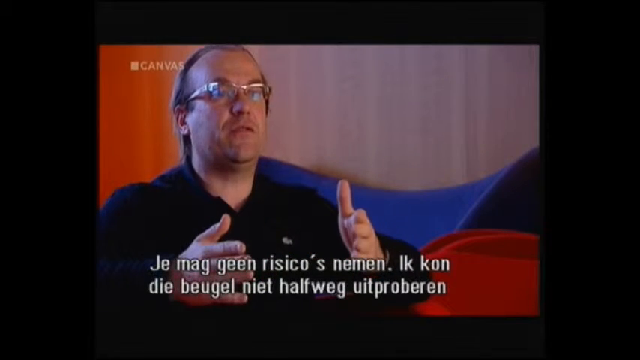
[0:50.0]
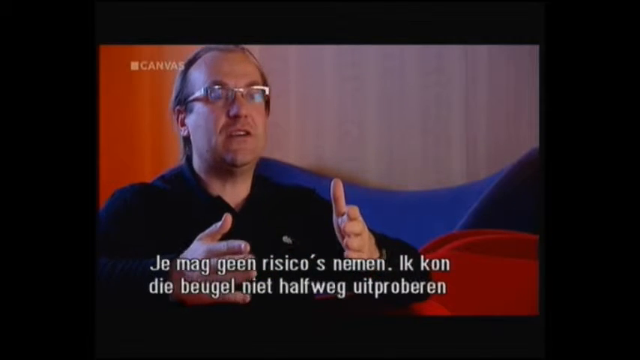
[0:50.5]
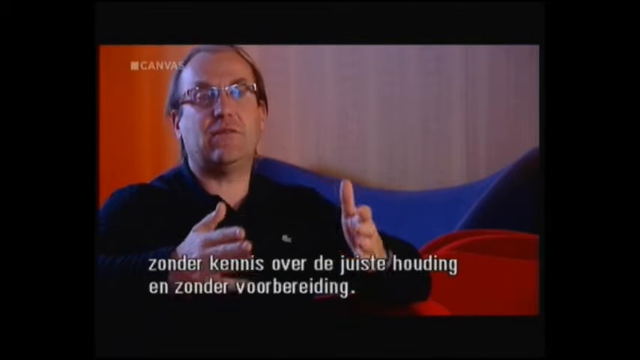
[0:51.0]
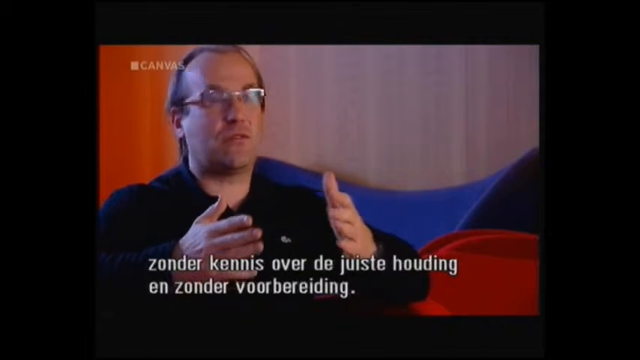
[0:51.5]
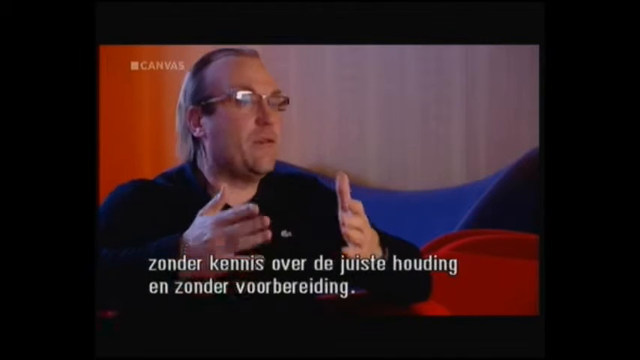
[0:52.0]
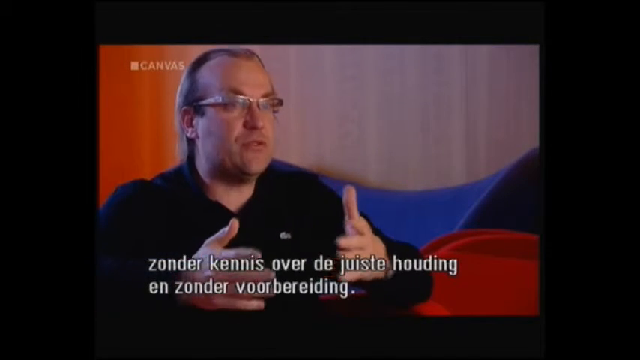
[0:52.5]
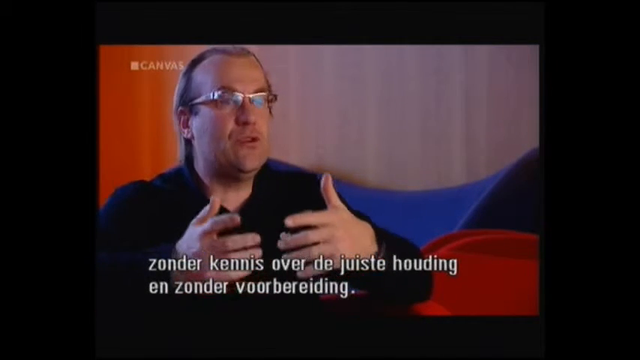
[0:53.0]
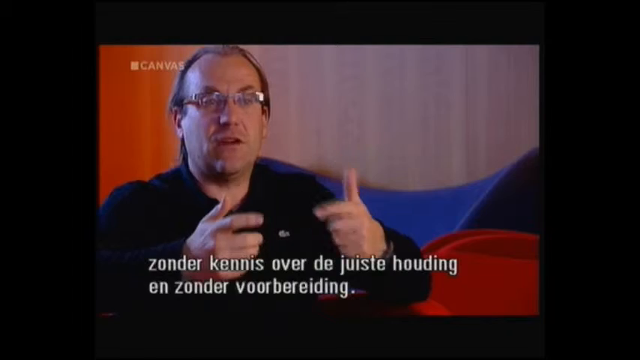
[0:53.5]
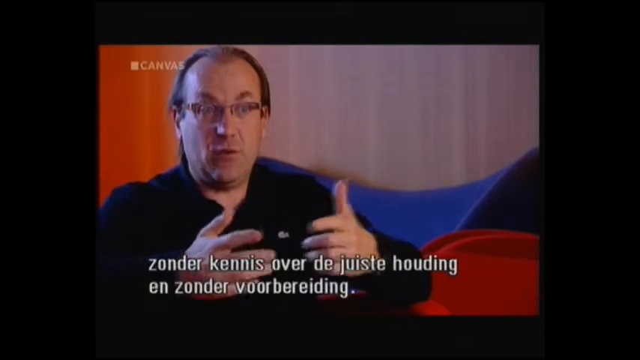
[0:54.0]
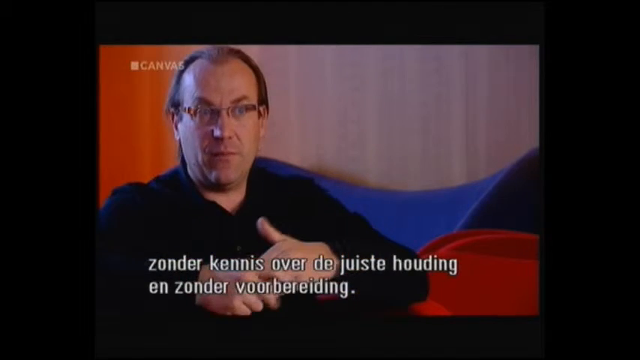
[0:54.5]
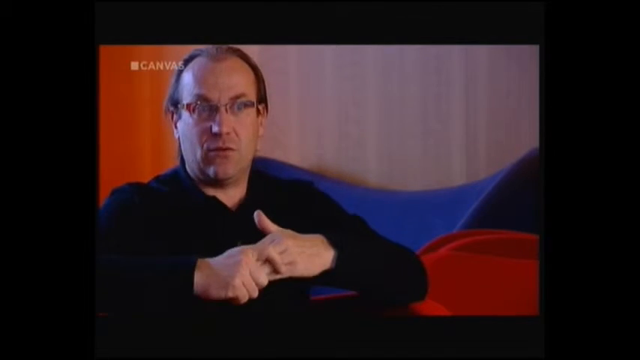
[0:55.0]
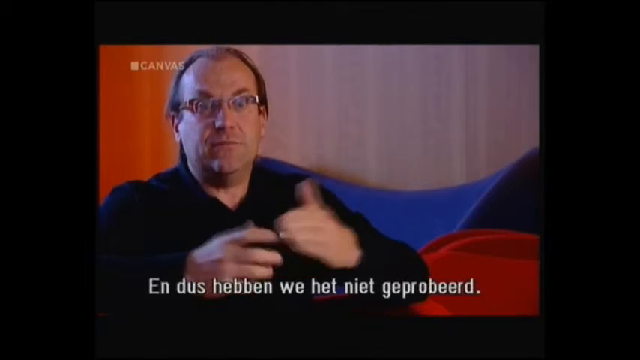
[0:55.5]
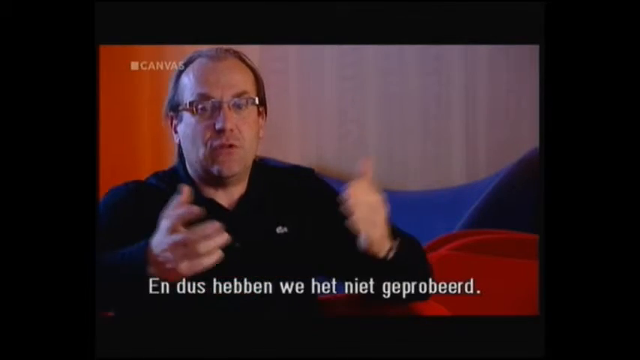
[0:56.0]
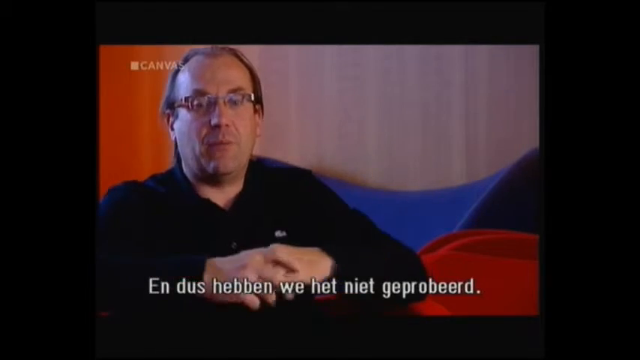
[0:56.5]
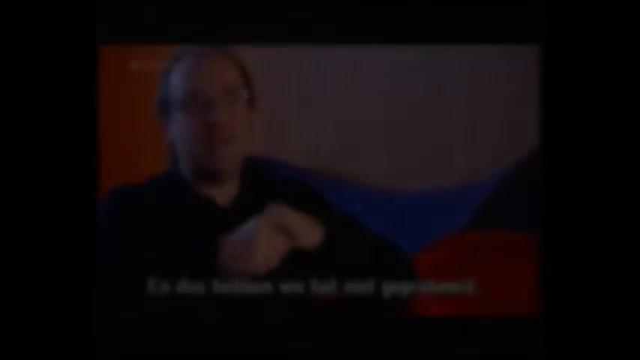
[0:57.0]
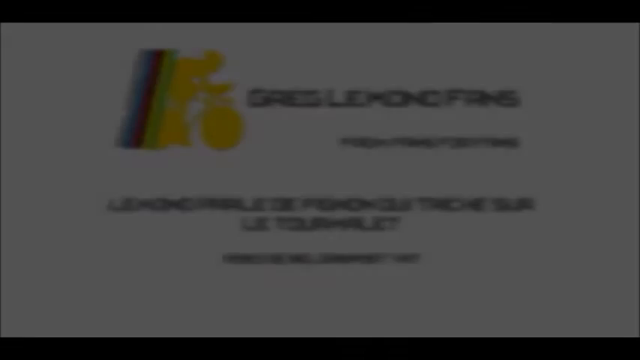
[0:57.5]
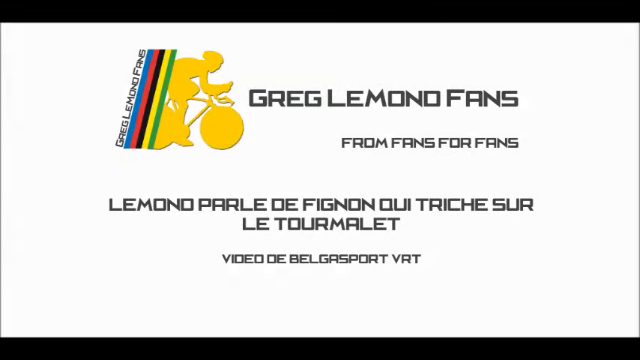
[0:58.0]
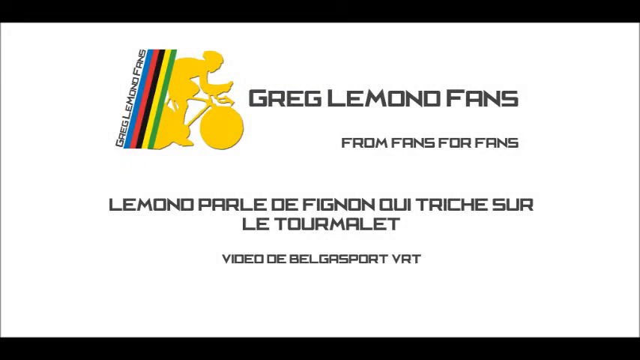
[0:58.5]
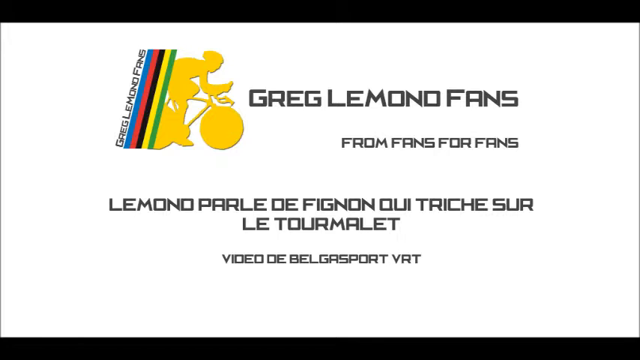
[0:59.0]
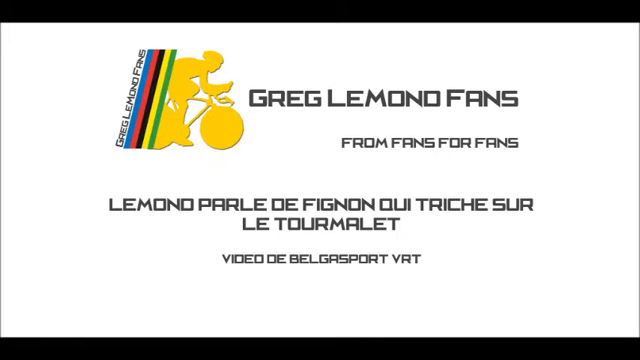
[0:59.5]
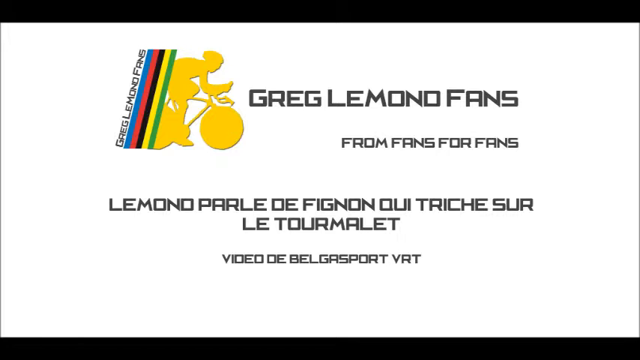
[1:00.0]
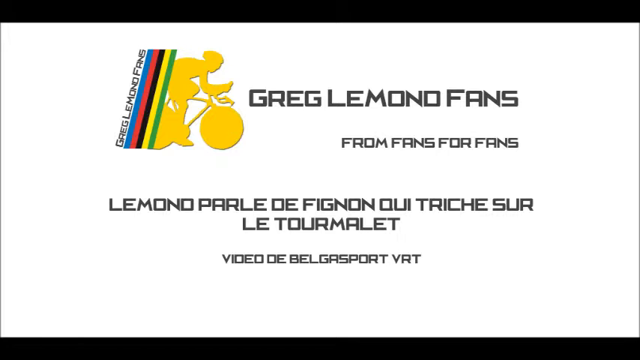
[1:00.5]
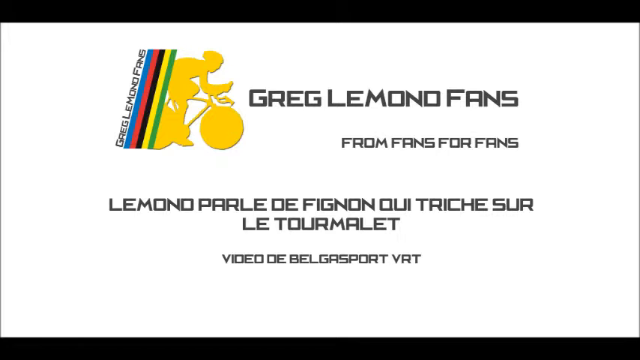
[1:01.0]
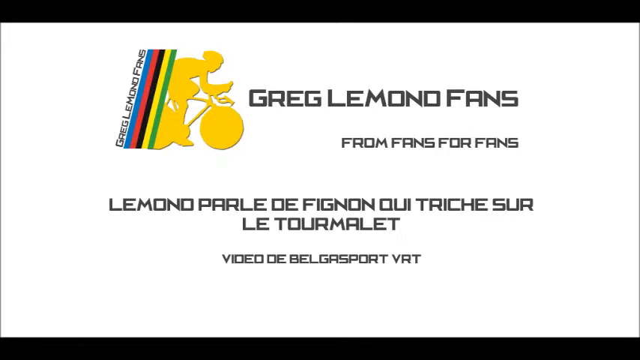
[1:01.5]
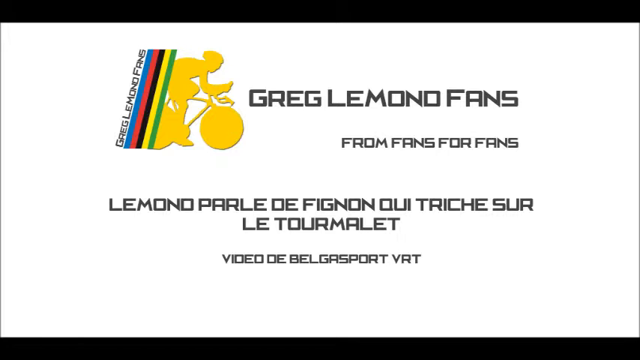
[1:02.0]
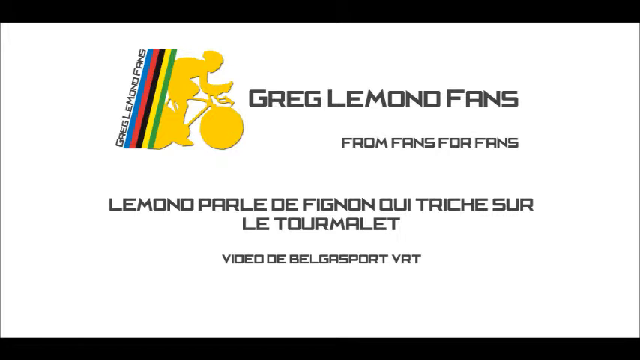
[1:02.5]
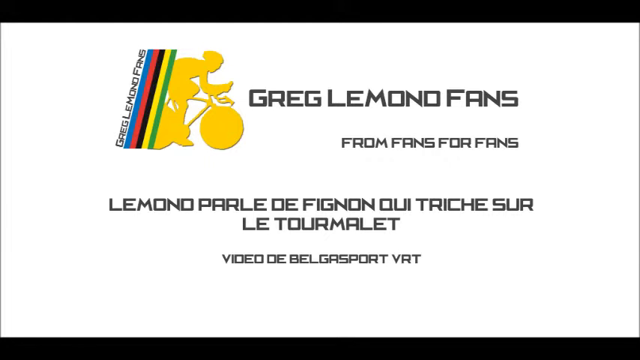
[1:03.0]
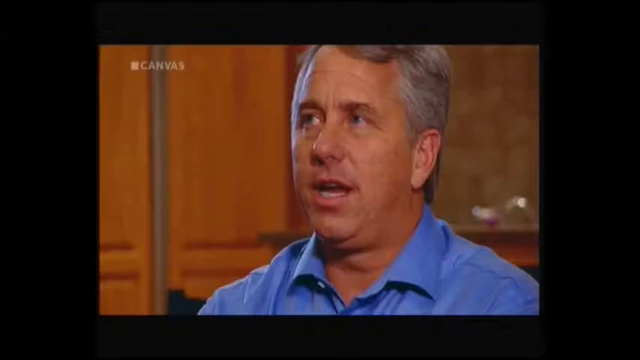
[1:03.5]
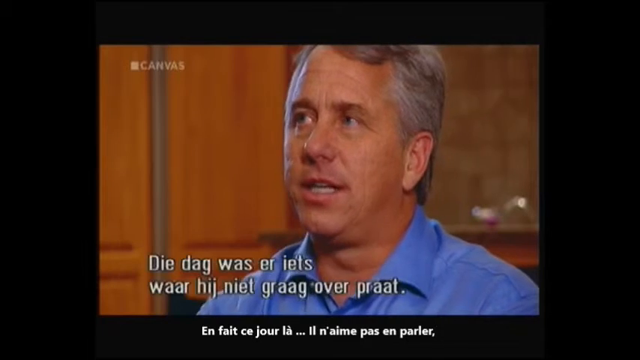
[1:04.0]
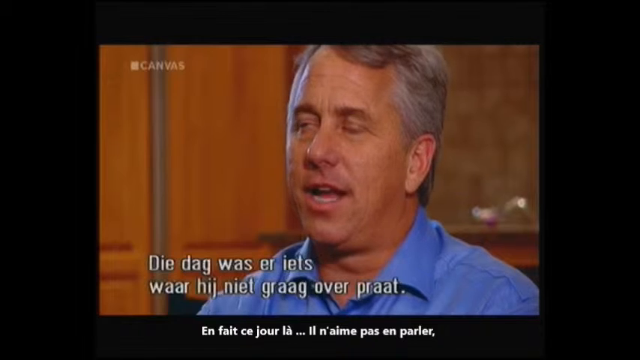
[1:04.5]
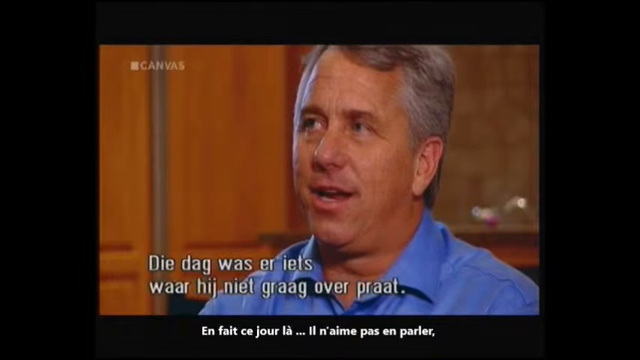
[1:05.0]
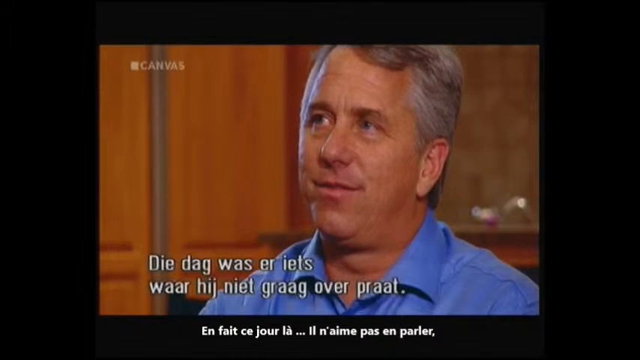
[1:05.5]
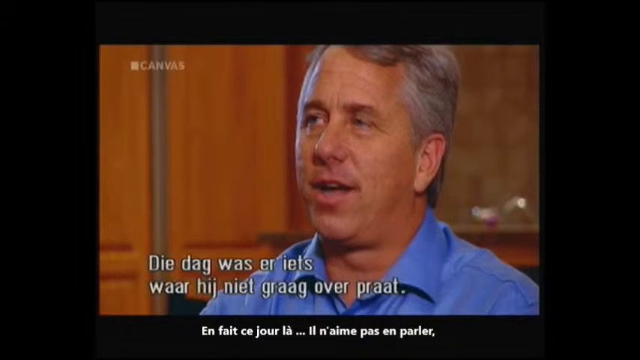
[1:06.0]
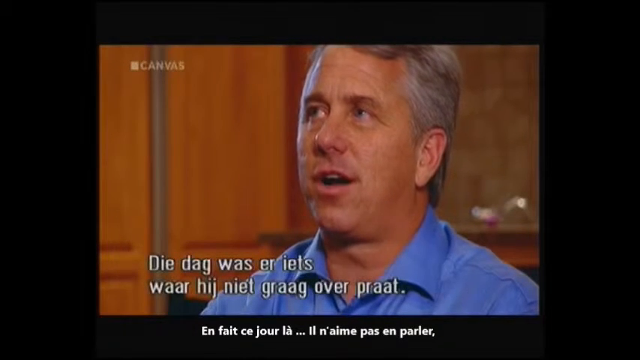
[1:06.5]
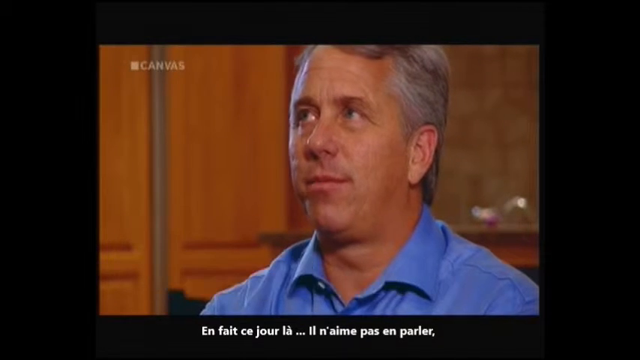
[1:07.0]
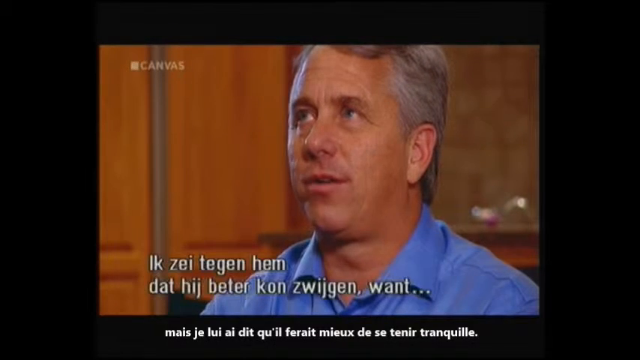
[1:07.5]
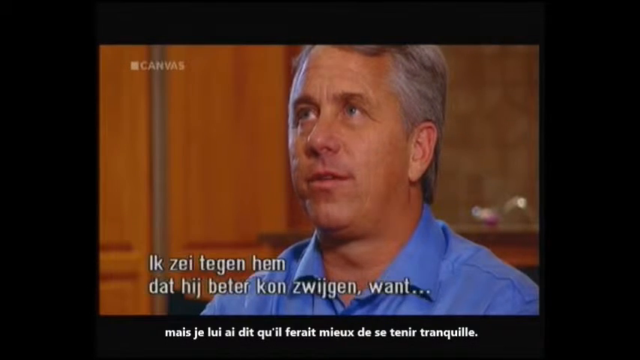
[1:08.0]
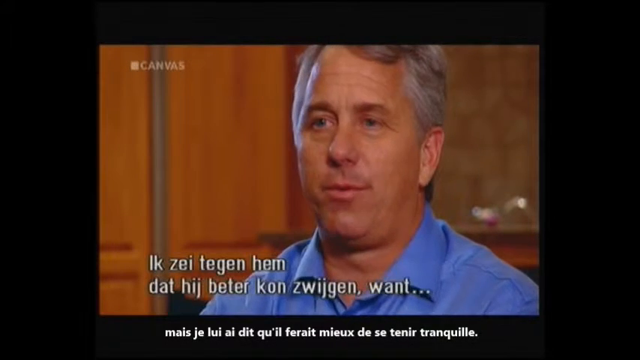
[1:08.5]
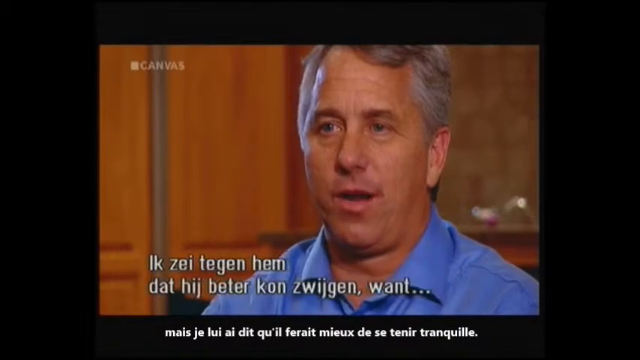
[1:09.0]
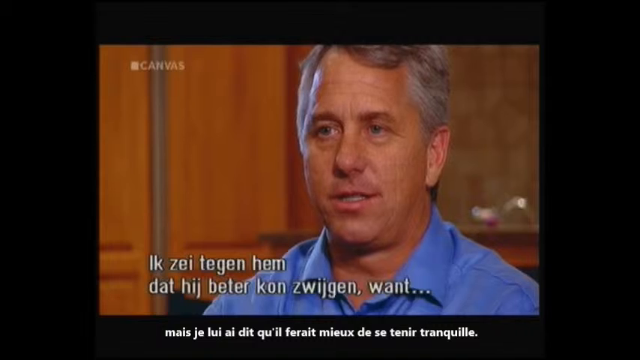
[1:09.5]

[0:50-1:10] The same Caucasian man continues to speak in an interview format, with balding at the front of his head, long hair in the back, glasses, and a long-sleeved black collared shirt. Subtitles at the bottom of the screen are not in English. He gestures with both hands held out in front of him, palms facing each other and fingers straight forward, moving them slightly left and right and up and down. He then points both pointer fingers, grabs his left fingers with his right hand, kind of shrugs, opens his hands and moves his arms outward, then clasps his hands back together and grabs the fingers of his left hand with his right hand. The same title as at the beginning of the video comes back up, beginning "Greg Lemon fans from fans for fans" and ending with "VRT"; it is possibly French. Then another Caucasian man starts speaking on screen in an interview format. He might be in his 50s, wears a blue collared shirt, and has white skin with a tan and blue eyes. There are two sets of subtitles at the bottom of the screen; the bottom one looks like it might be French and the top one looks like it might be German. He speaks while looking forward, looks slightly to his right for a second, then looks to his left at the interviewer, and glances at the camera for a split second.